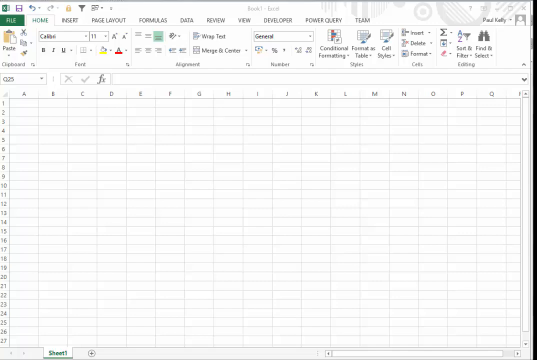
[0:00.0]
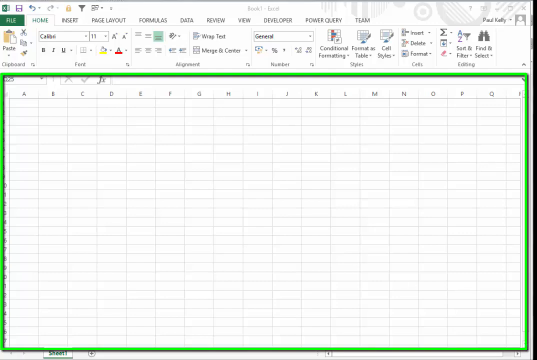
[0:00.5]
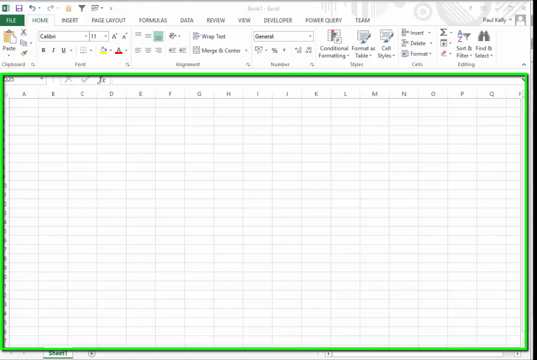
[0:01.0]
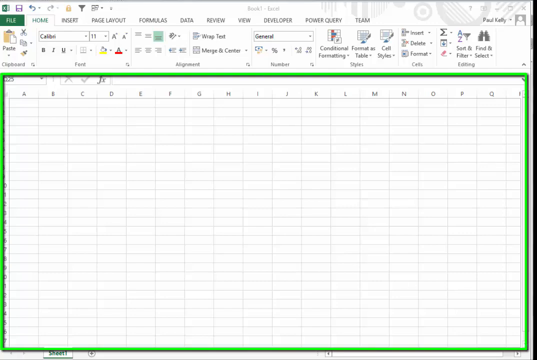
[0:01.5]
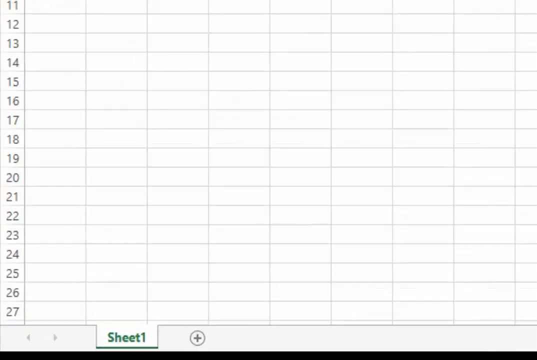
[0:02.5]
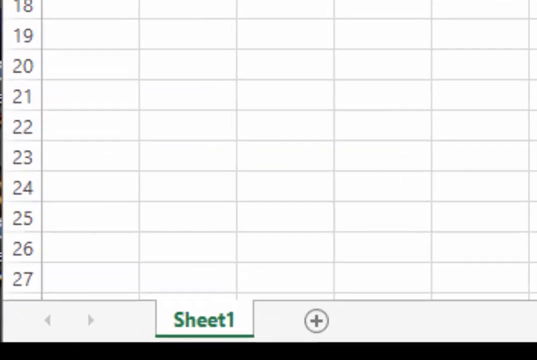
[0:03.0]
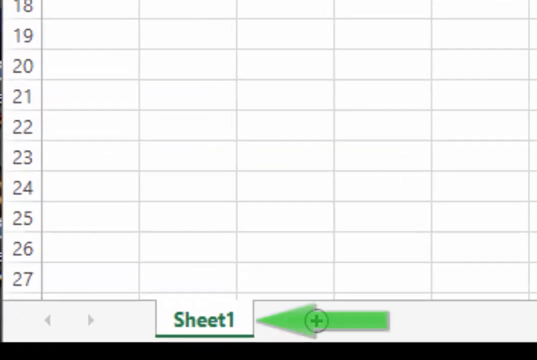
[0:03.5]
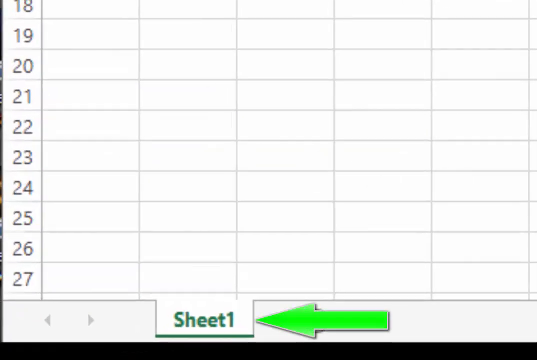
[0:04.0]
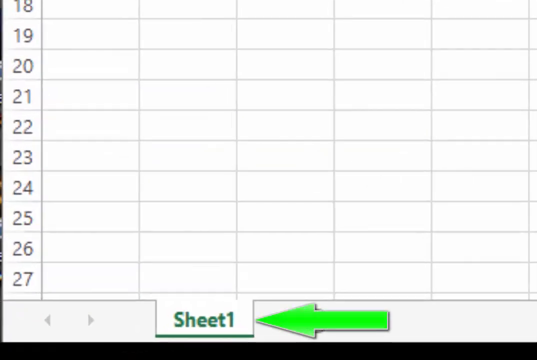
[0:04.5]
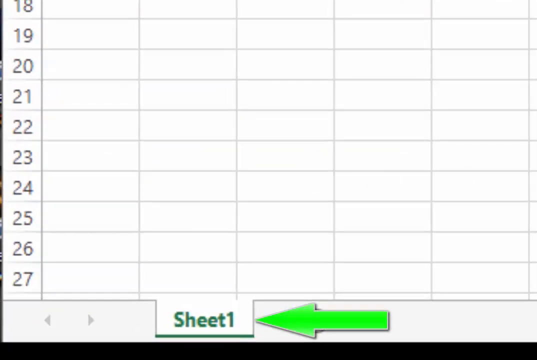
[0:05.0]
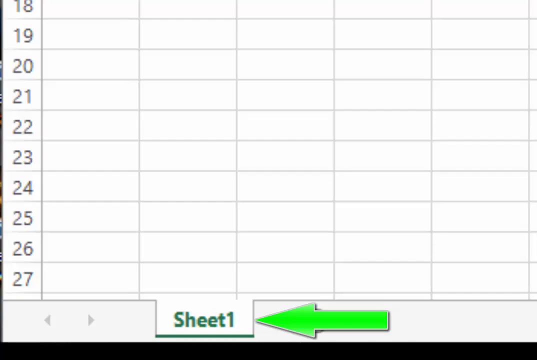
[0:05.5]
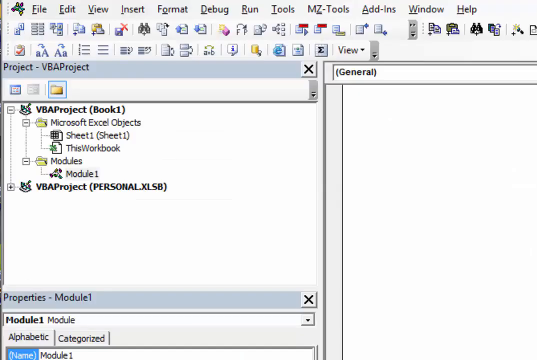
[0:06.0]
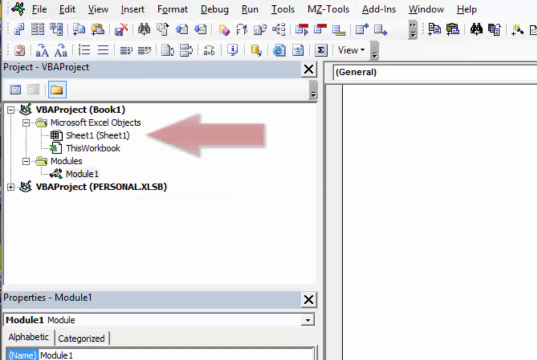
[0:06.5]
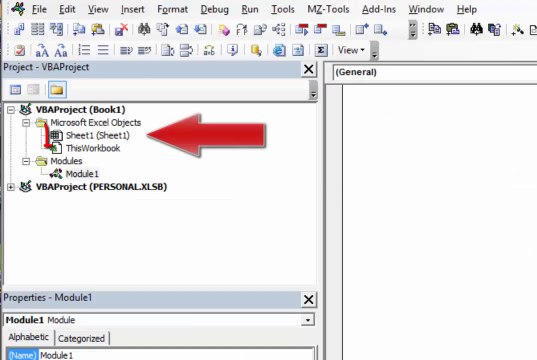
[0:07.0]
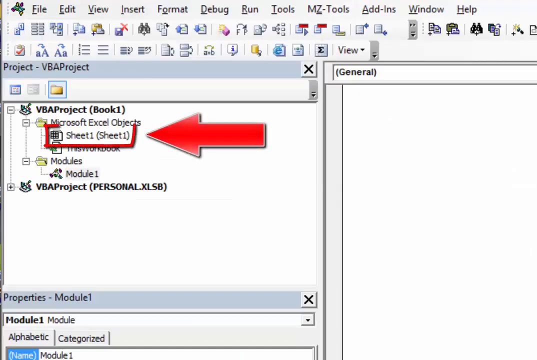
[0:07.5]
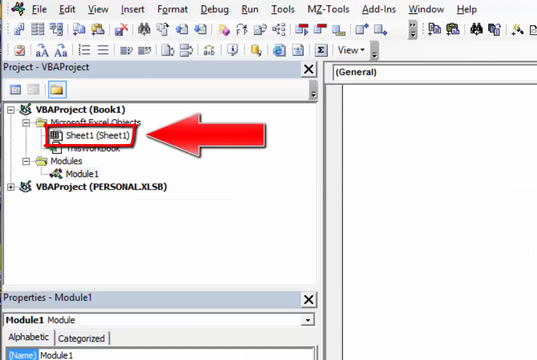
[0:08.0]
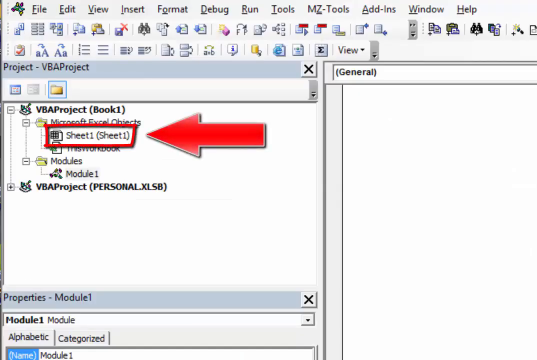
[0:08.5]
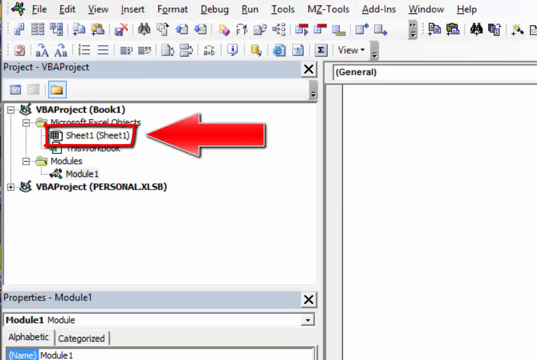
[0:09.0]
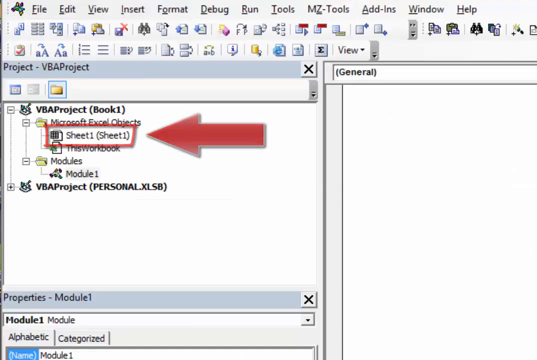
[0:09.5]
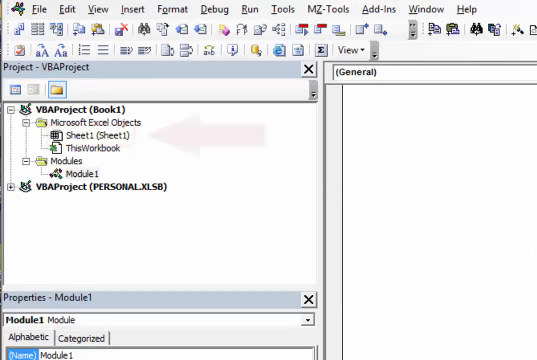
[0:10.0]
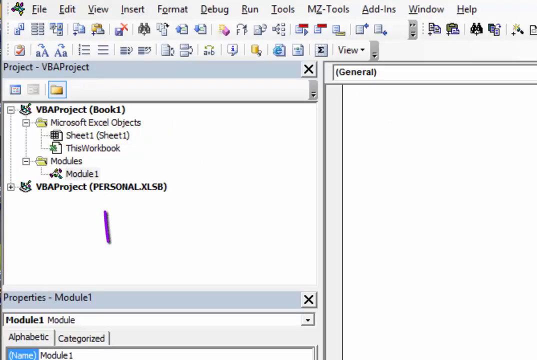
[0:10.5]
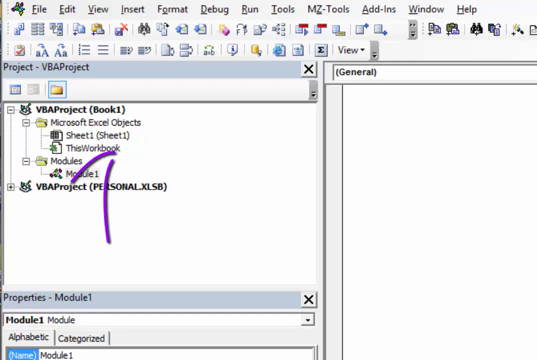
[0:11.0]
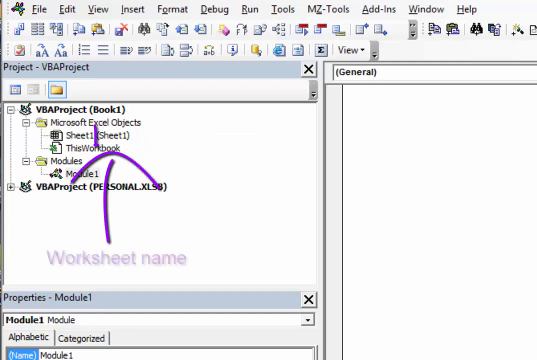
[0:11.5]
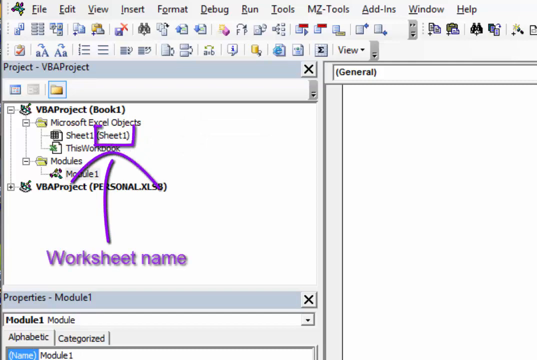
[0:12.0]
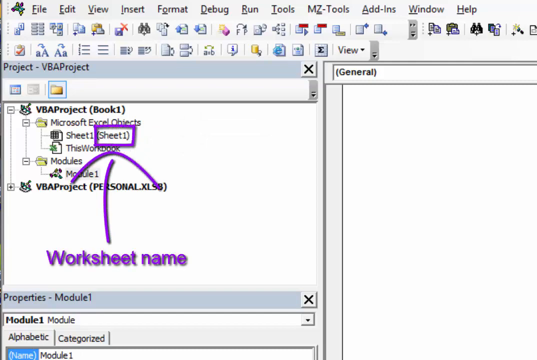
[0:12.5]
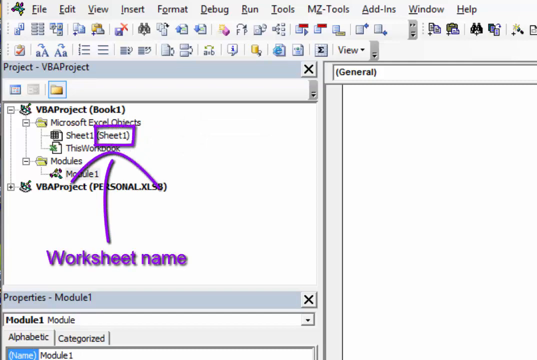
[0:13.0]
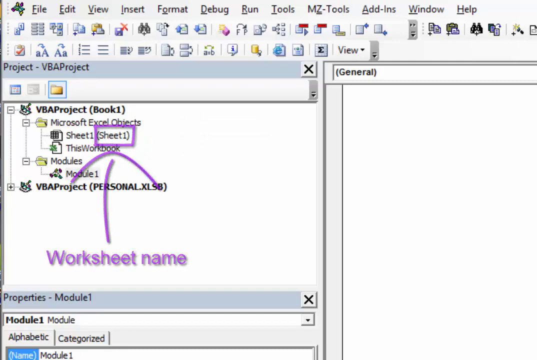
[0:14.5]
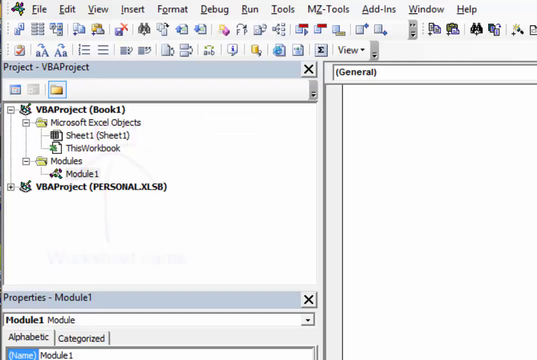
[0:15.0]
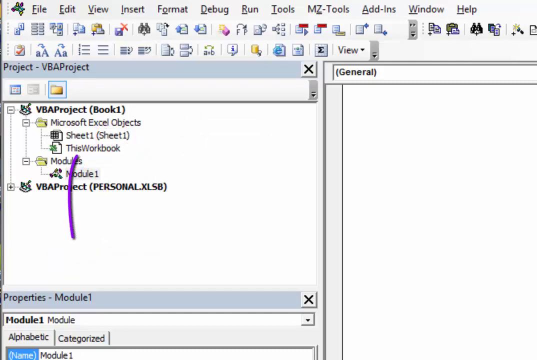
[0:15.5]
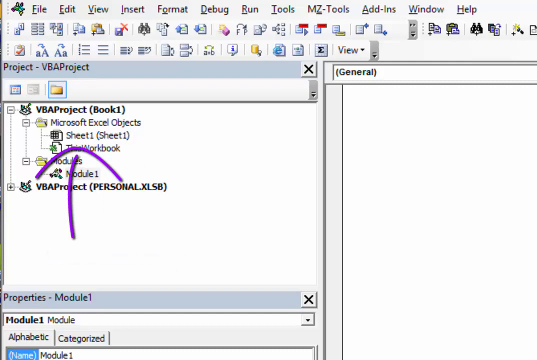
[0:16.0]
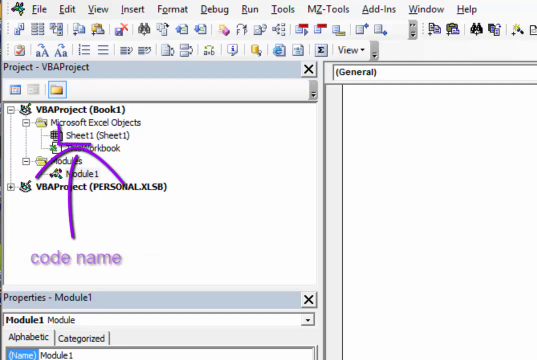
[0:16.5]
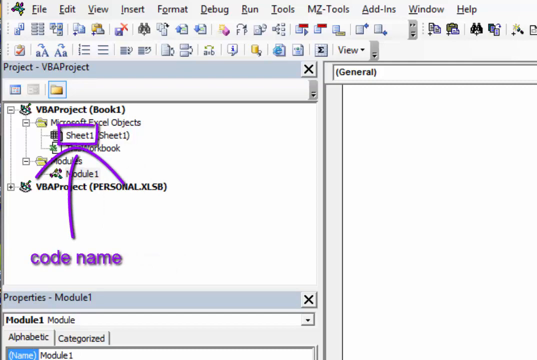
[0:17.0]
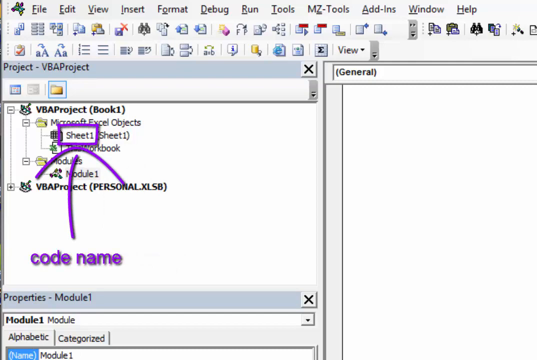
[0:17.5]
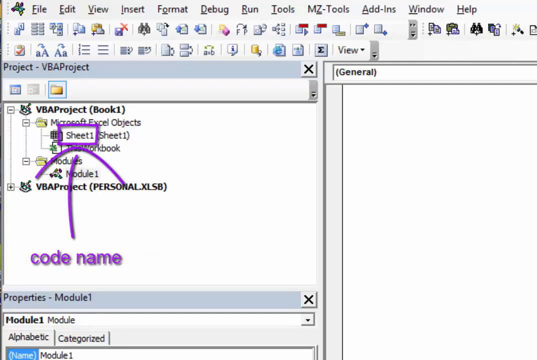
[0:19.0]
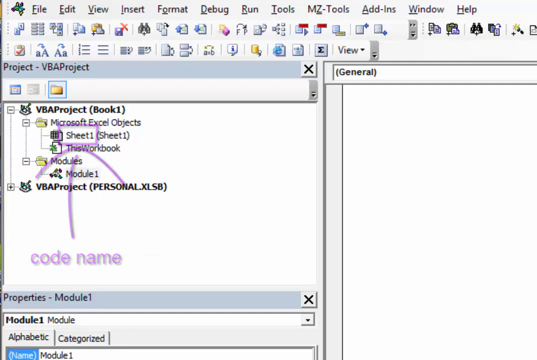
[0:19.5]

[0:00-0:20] An empty Excel worksheet is shown. At the bottom there is a sheet tab labeled "sheet one," and the sheet's code name is shown as Sheet1.